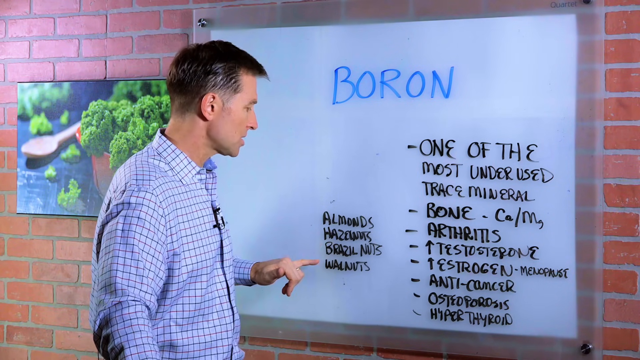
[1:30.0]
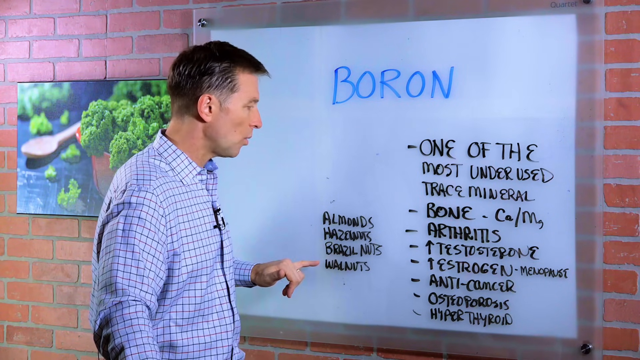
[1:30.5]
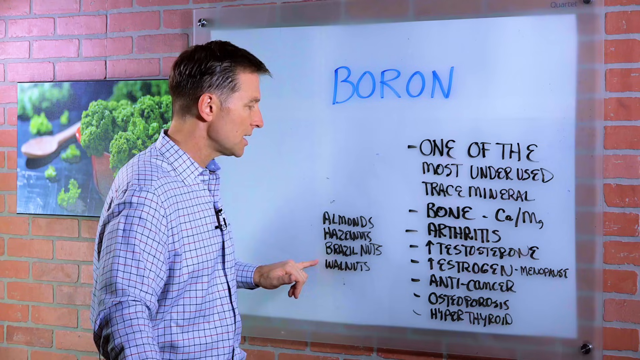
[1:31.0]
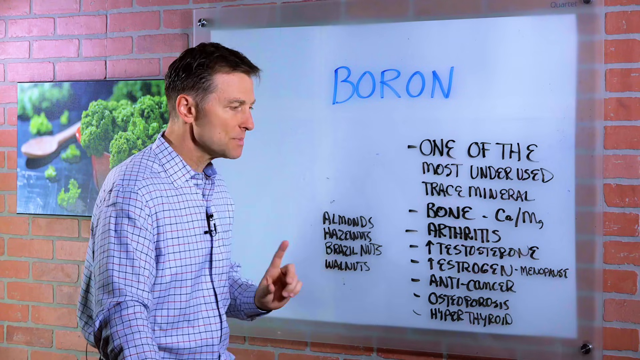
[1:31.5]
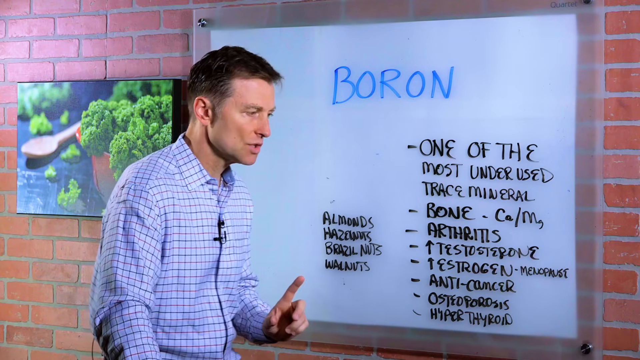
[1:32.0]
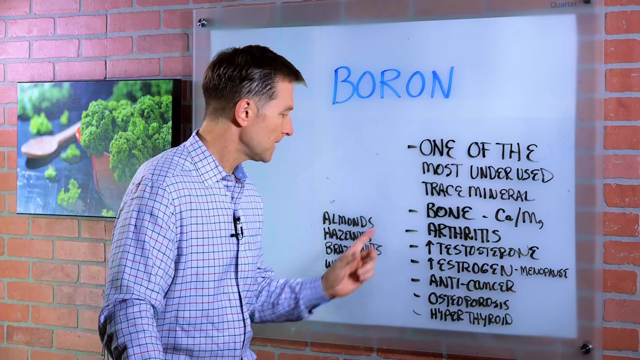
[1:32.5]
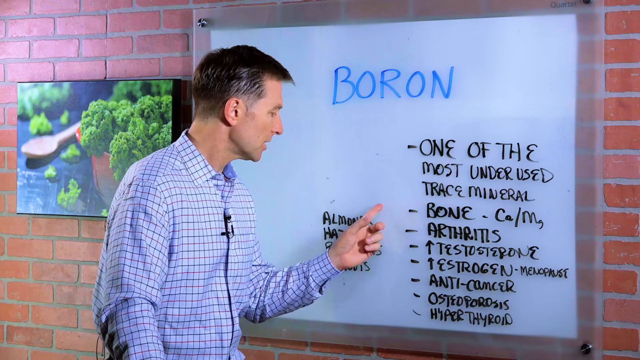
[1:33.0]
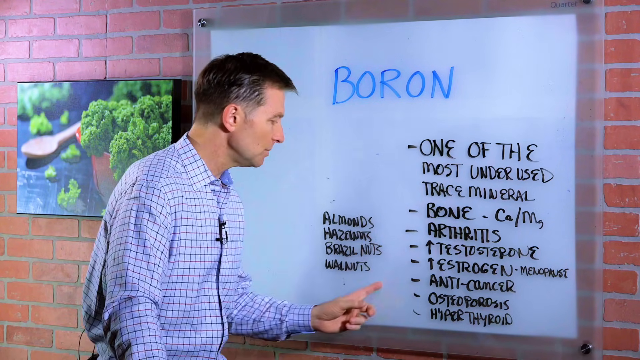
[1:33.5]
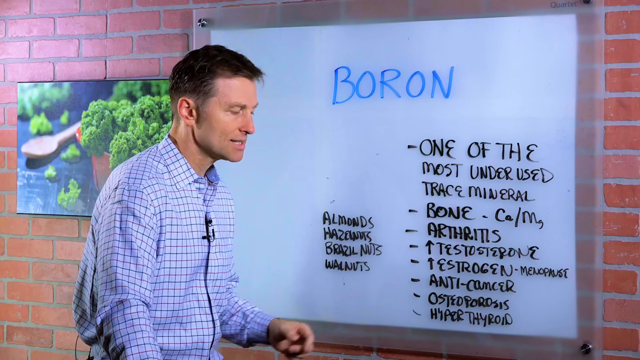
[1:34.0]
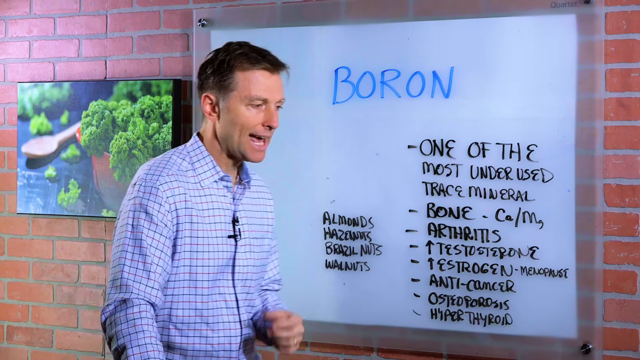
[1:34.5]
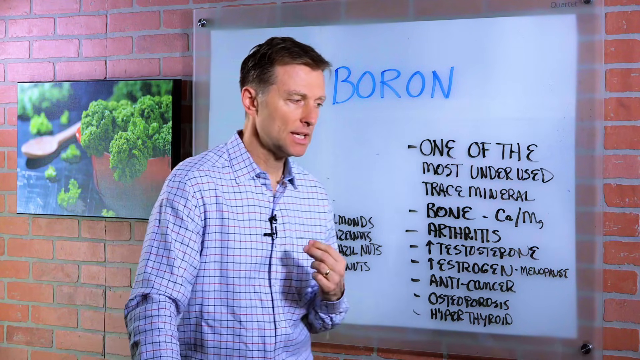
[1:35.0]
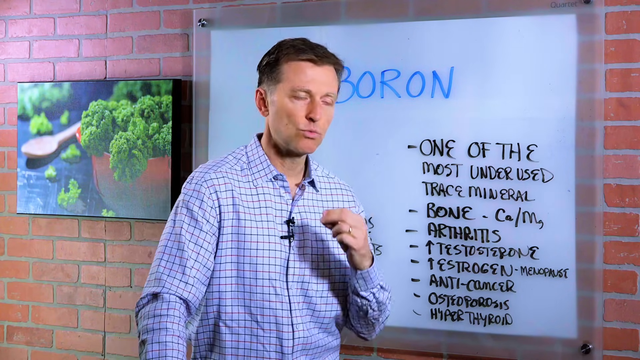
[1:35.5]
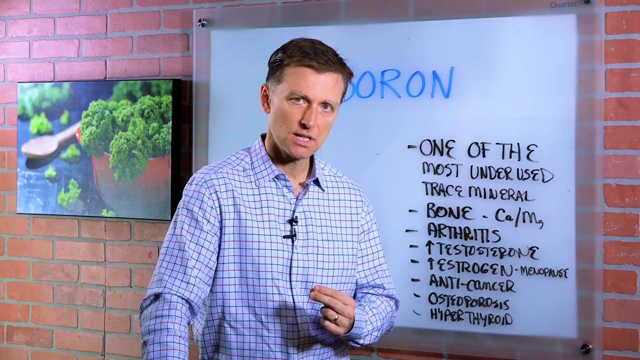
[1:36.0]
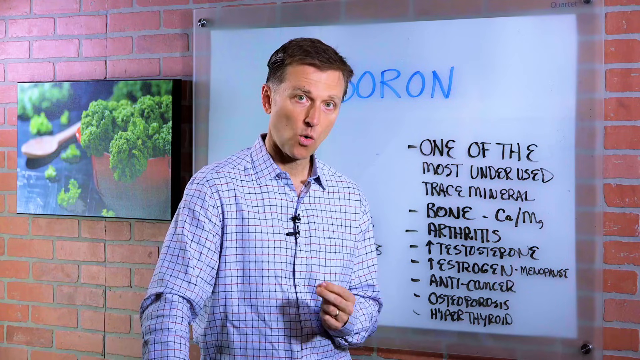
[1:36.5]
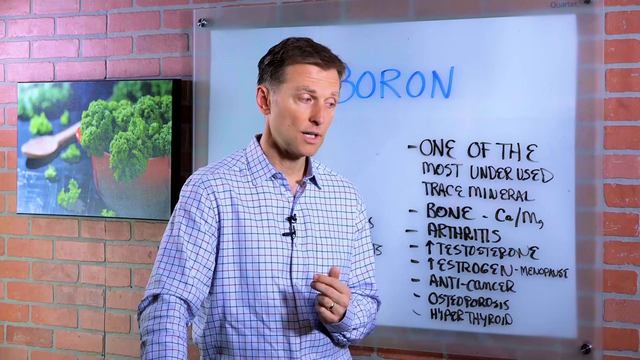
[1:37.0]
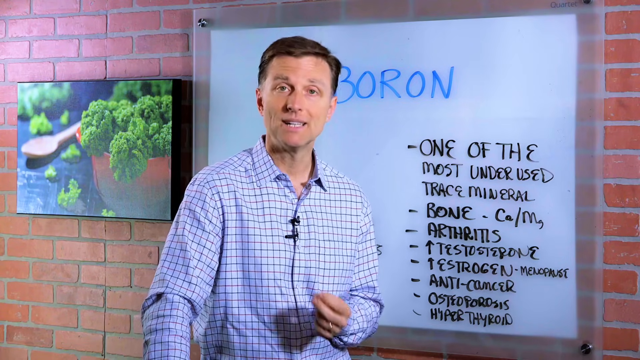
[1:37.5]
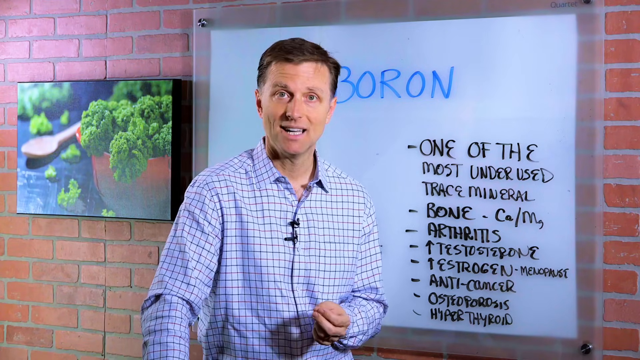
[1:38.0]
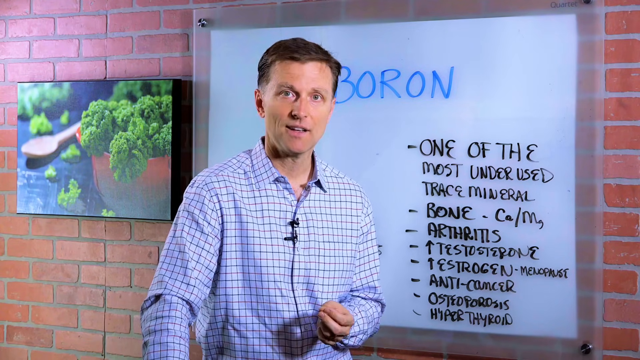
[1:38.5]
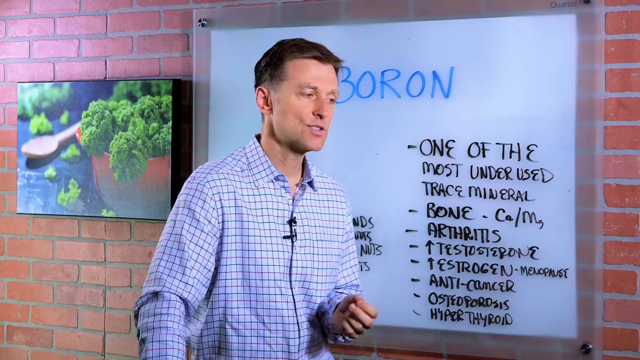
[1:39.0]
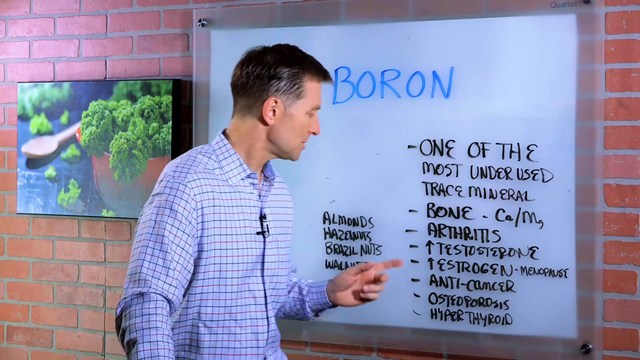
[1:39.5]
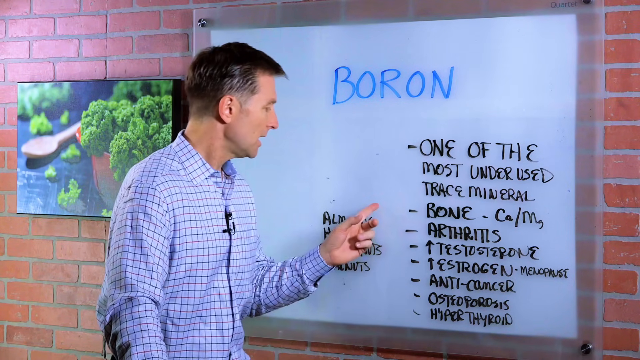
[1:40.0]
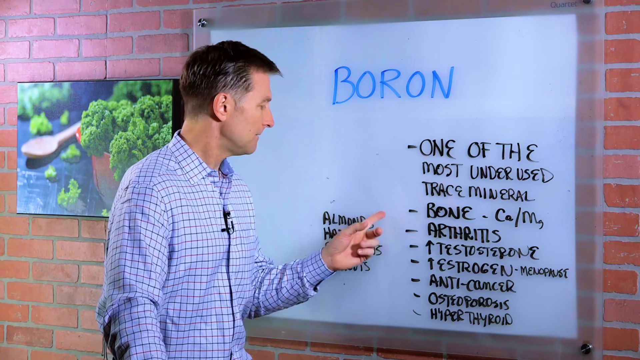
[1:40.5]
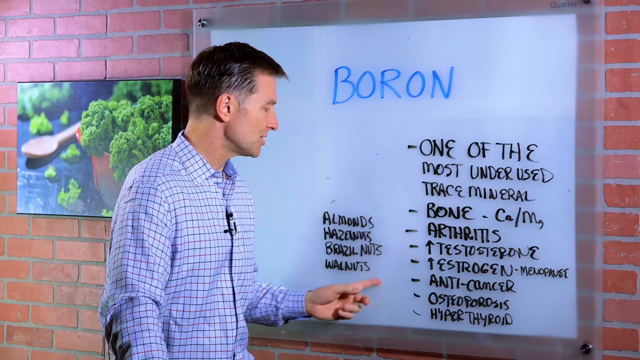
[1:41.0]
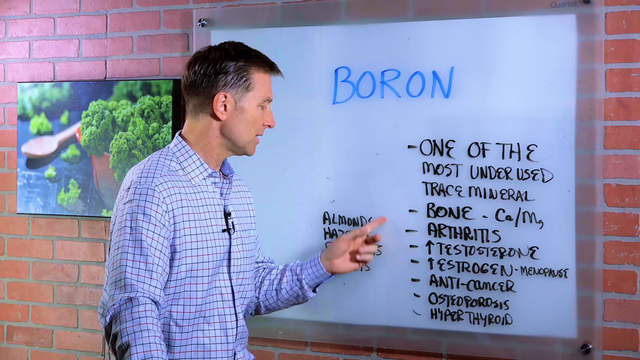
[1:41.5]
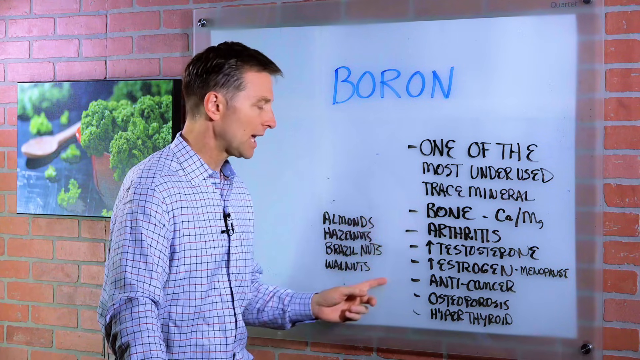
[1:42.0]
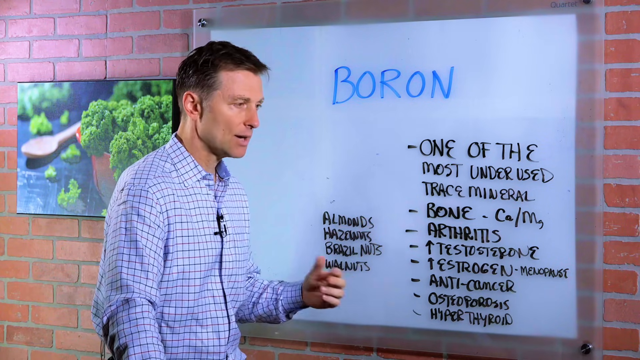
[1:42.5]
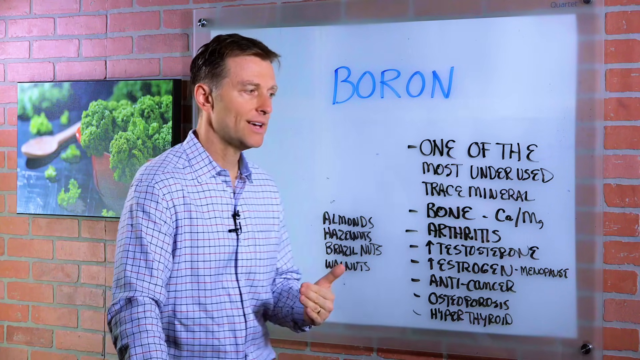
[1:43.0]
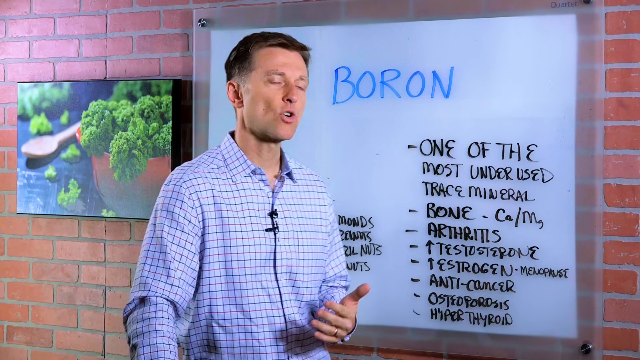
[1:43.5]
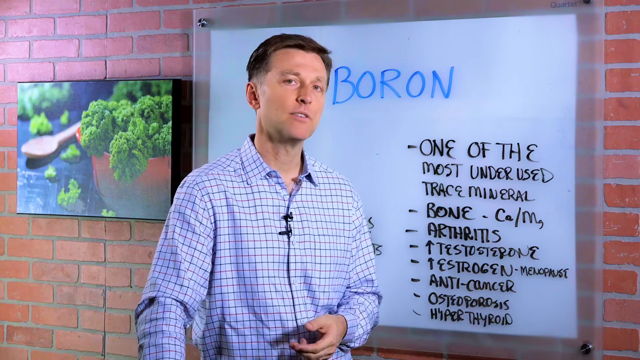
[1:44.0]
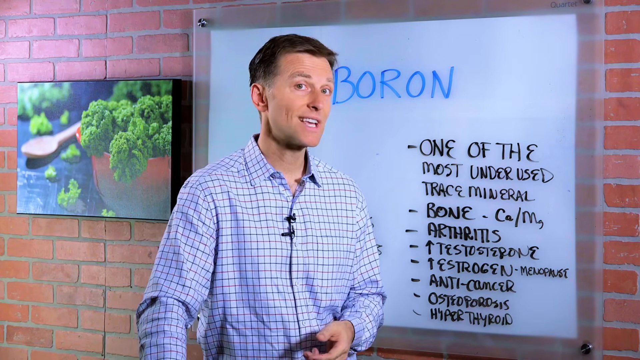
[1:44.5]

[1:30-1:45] A man with short brown hair wears a light blue long-sleeve button-up shirt with a small black microphone attached to it. He stands in front of a white work board on which the word "Boron," spelled B-O-R-O-N, is written in blue. Underneath it is written "one of the most underrated trace minerals," and underneath that "Bone, Arthritis, Testosterone, Estrogen, Anticancer, Osteoporosis, Hypothyroid," all in black. To the left of that it says "Almonds, Hazelnuts, Brazelnuts, and Peanuts," also in black. To the left of the board is a small black-framed painting of a brown bowl with green broccoli hanging over the side, and beside the bowl is a small light brown wooden spoon.